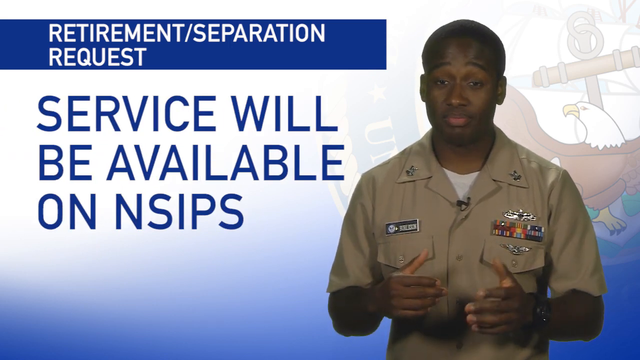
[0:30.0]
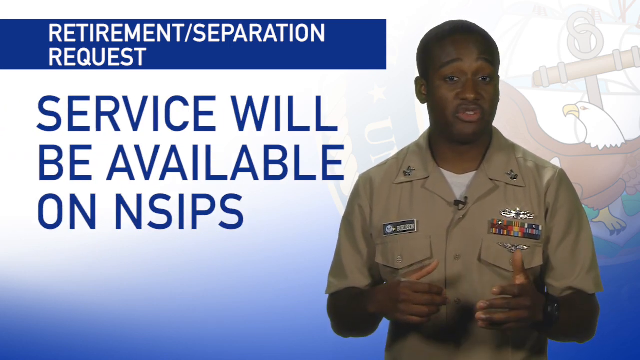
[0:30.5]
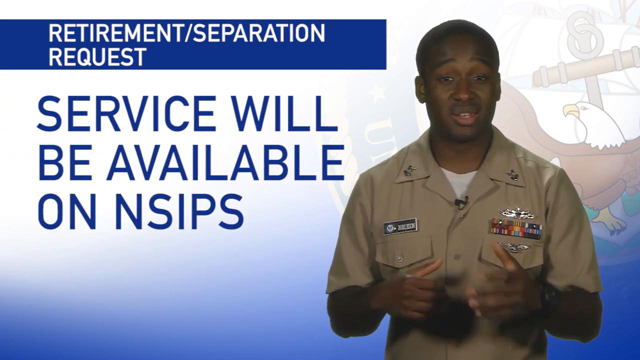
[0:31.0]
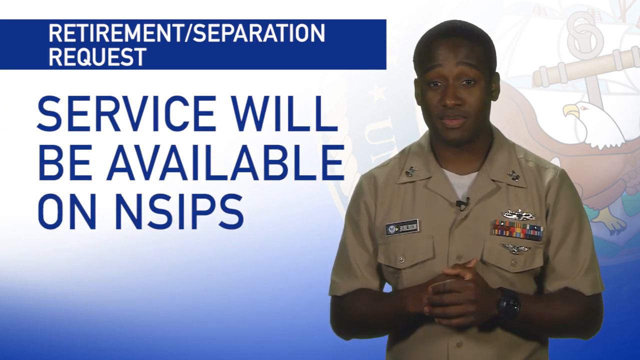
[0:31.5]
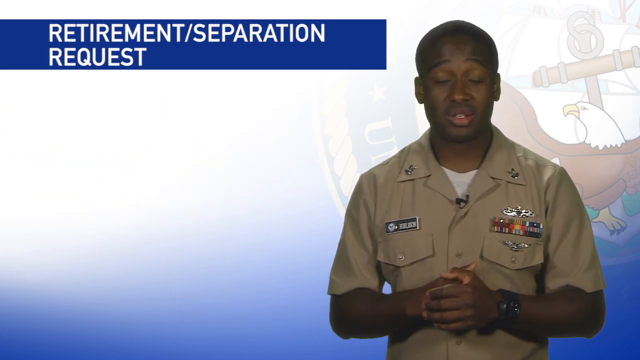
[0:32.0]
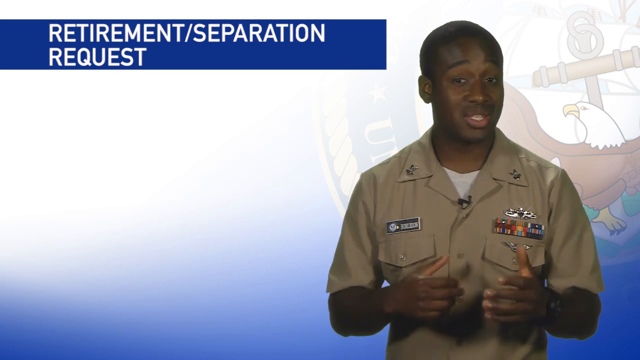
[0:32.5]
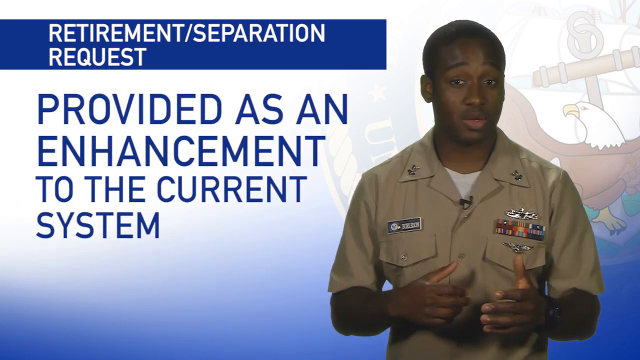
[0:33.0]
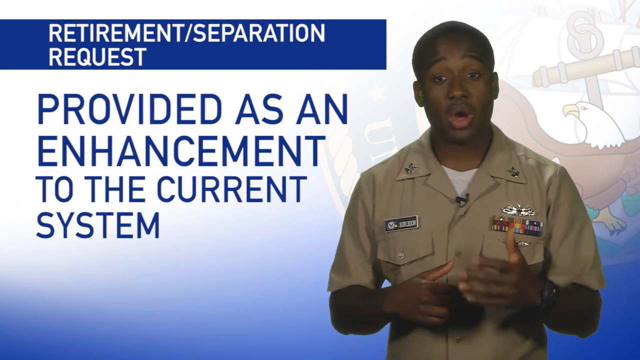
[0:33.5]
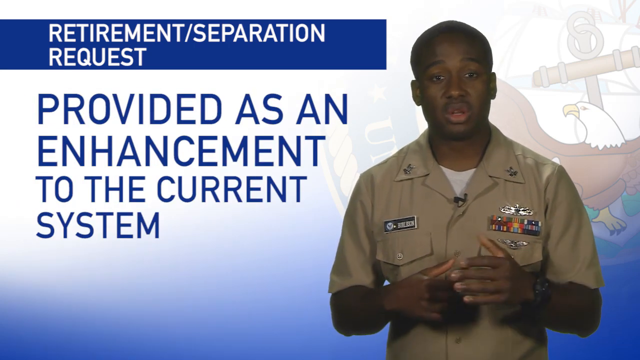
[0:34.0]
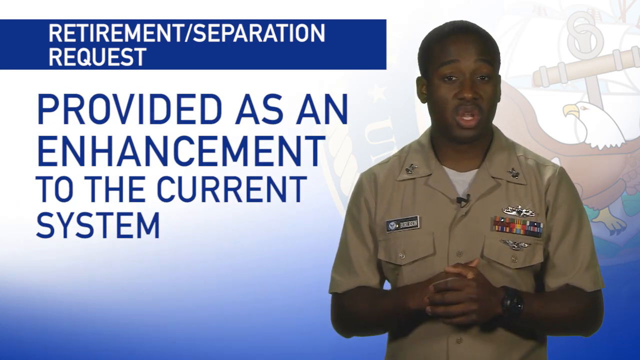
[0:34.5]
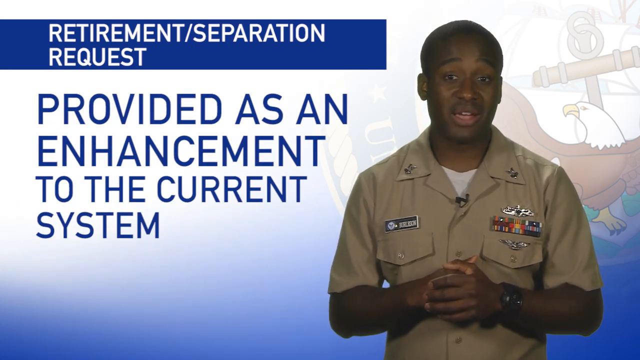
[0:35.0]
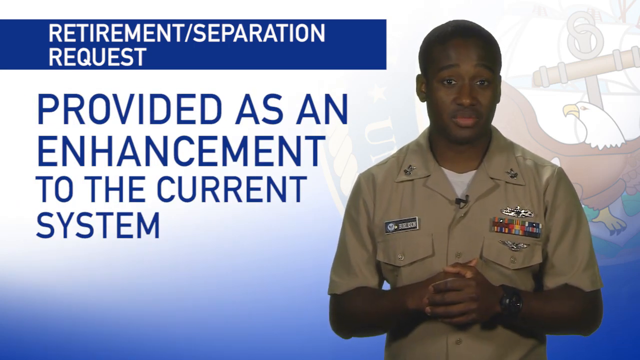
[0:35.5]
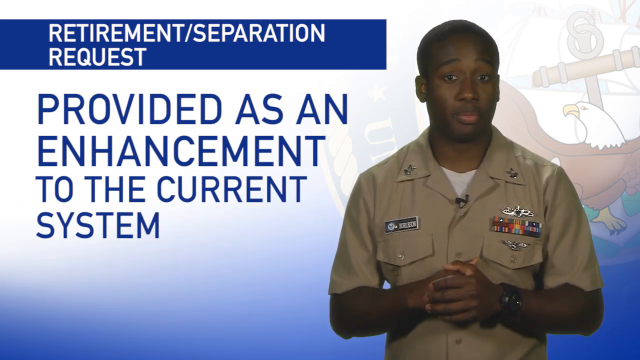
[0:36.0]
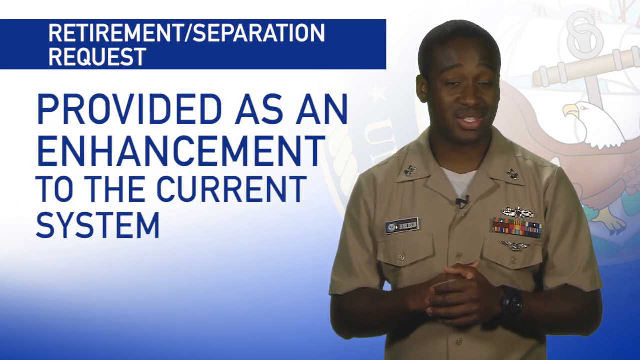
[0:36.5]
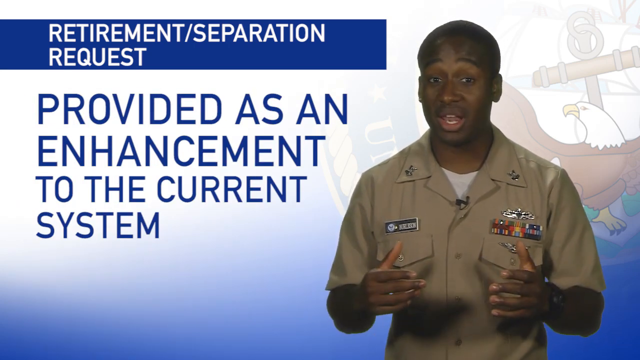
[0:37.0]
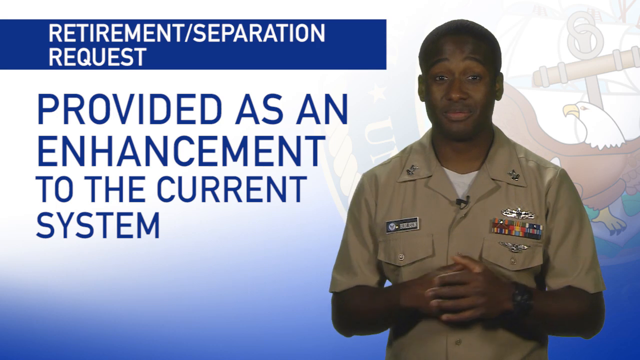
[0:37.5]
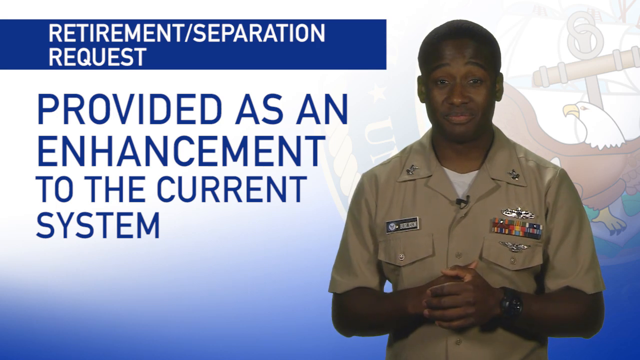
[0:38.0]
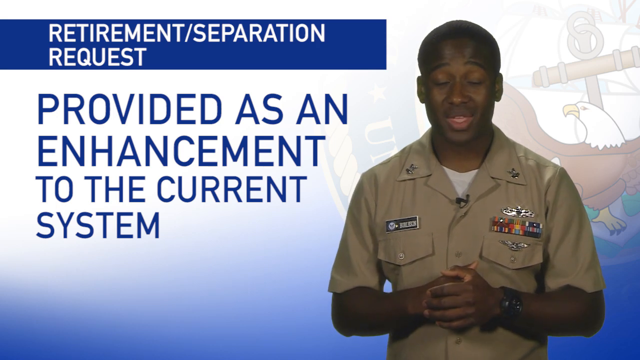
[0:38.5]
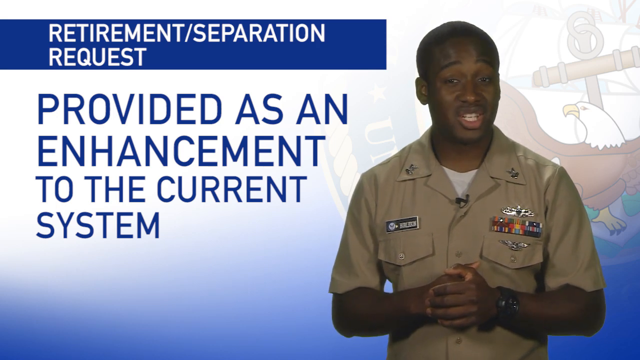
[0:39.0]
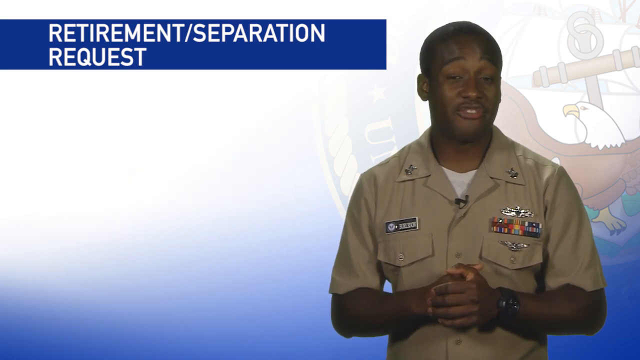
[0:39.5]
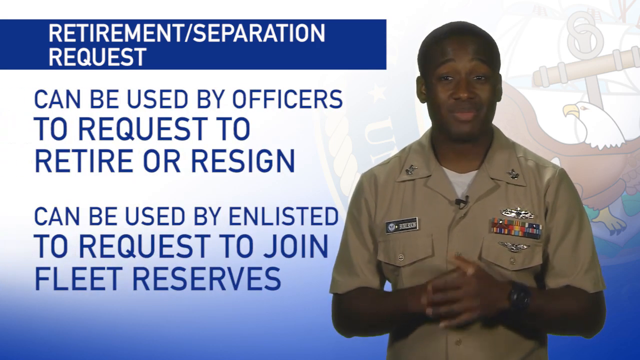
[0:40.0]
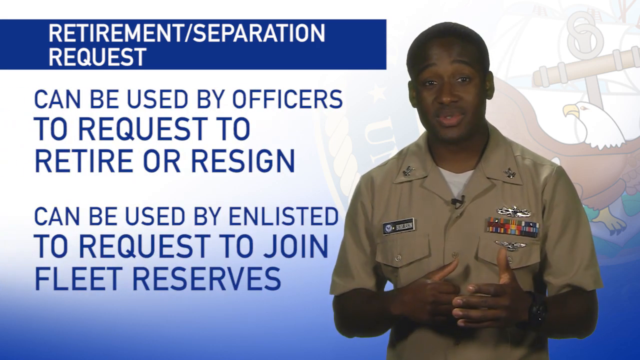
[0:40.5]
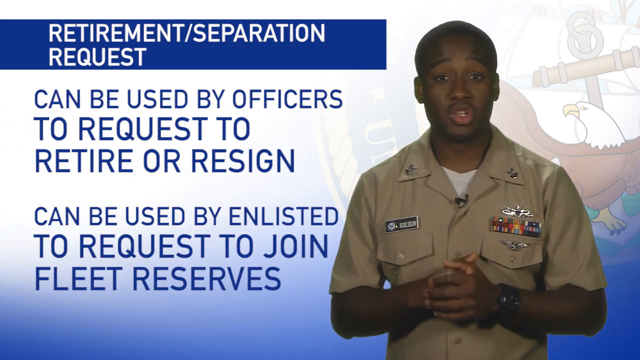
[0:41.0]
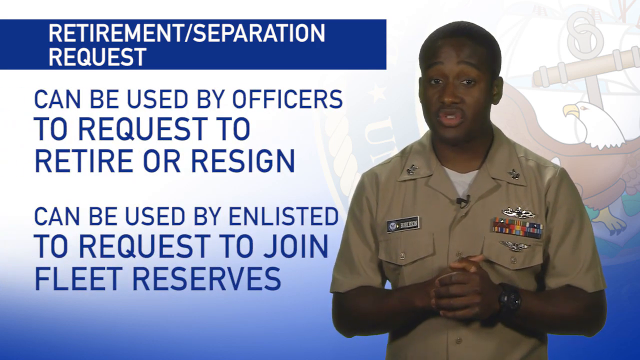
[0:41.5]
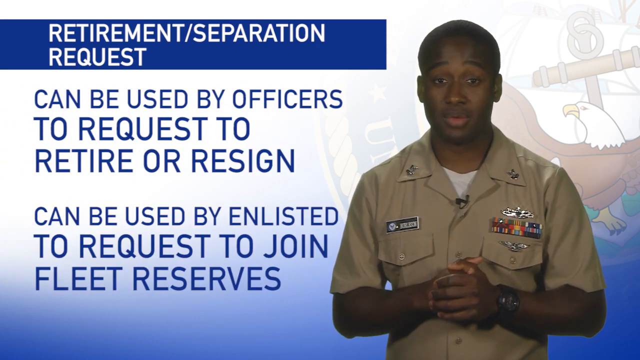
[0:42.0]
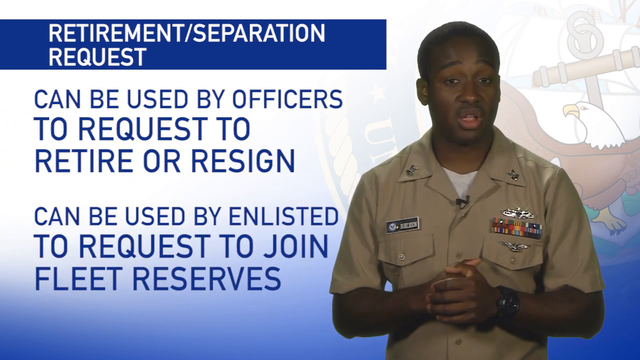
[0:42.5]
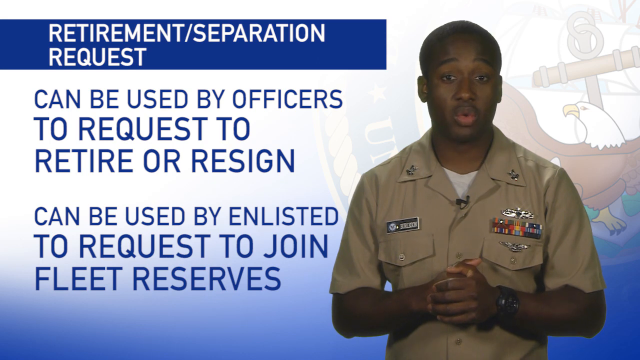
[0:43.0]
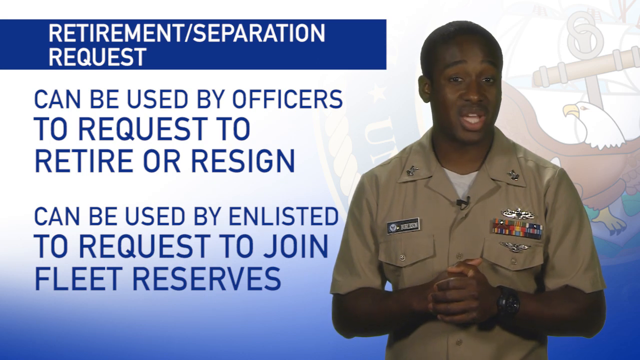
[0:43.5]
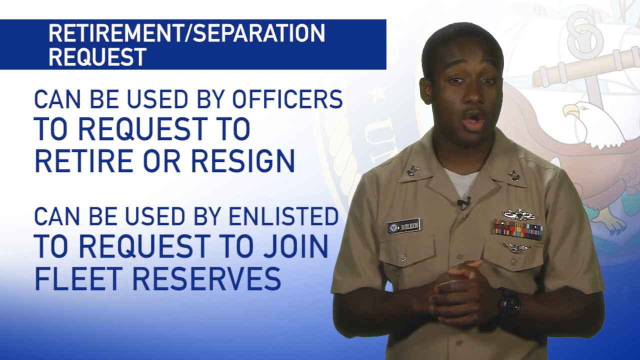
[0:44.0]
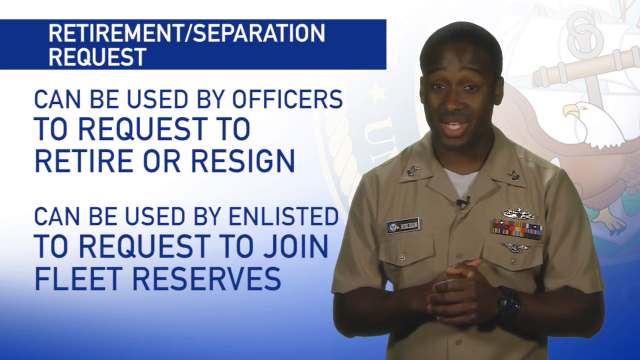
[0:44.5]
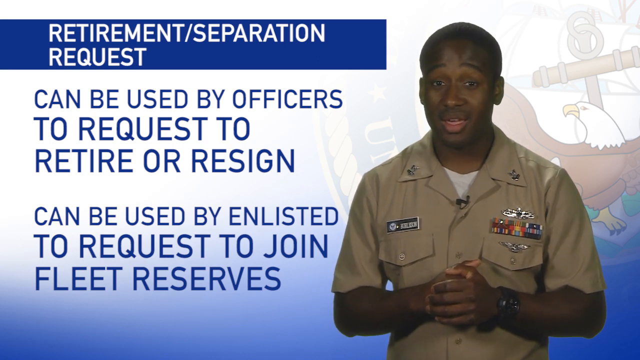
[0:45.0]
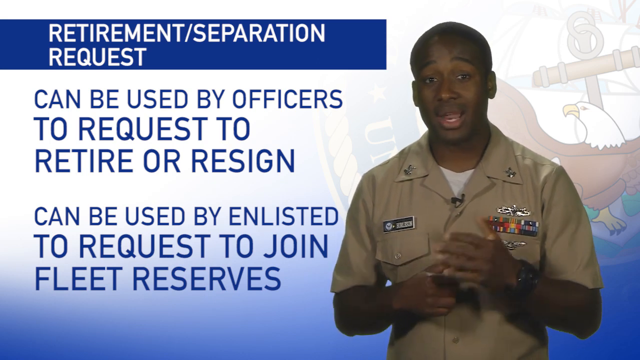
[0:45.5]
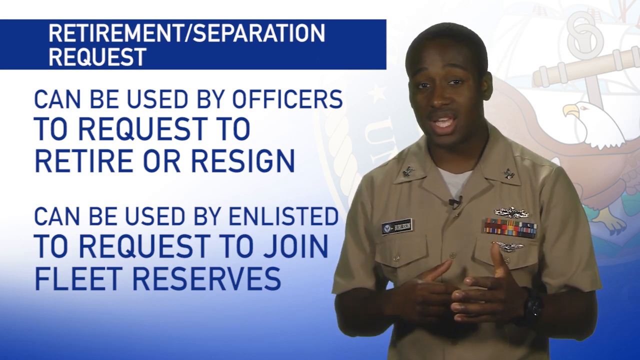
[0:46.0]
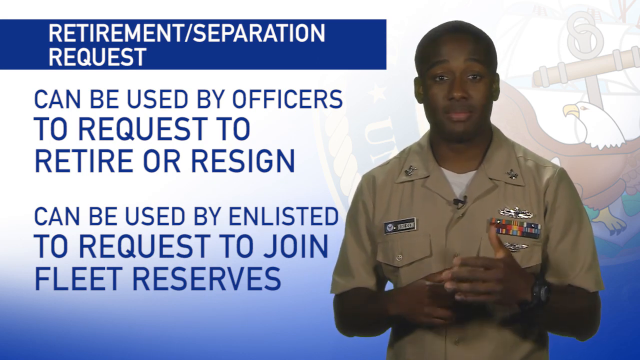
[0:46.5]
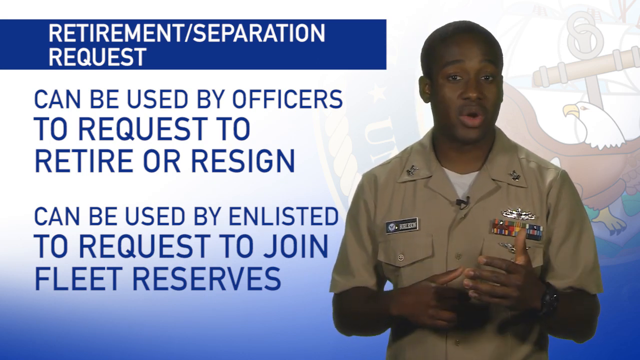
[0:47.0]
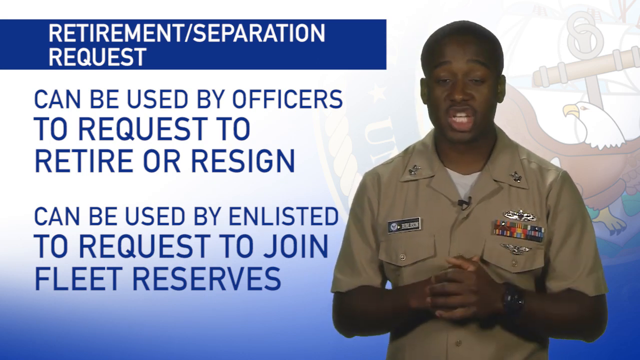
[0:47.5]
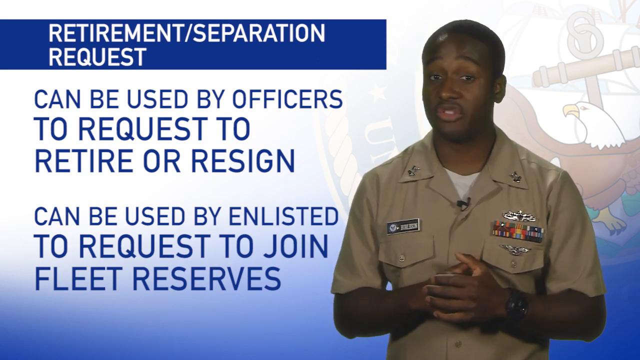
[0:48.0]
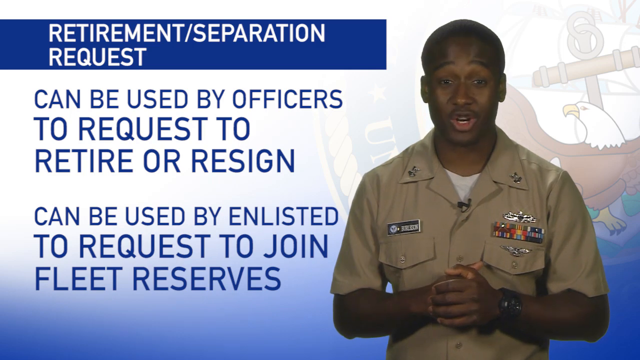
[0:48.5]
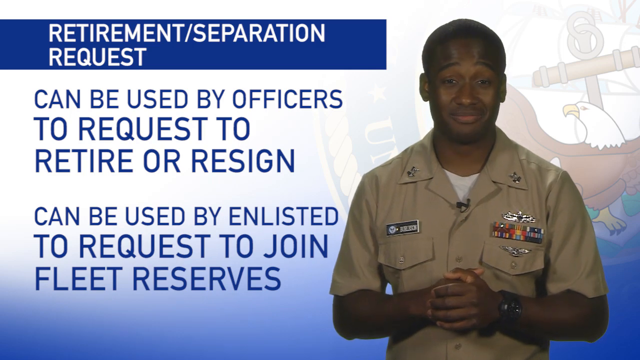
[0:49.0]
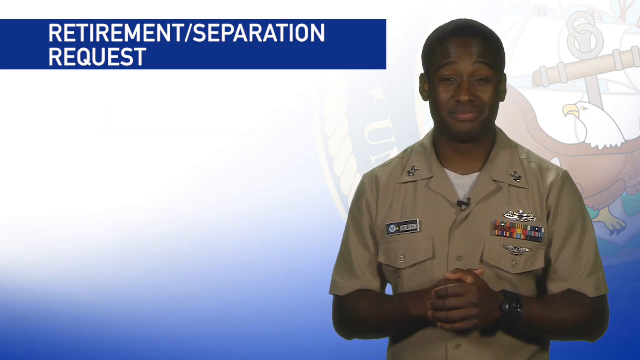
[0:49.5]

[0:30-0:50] A young Black soldier with medals on his chest and a buzz cut wears a brown army fatigue shirt. Text on the screen reads "retirement separation request" in white with a blue square around it, and underneath, in bigger letters, "service will be available in NSIPS." The man gestures with his hands in an informative manner. Text then reads "provide these as an enhancement to the current system," as the man opens and closes his hands in a welcoming manner. Next the text reads "can be used by officers to request to retire or resign," with "can be used by enlisted to request to join fleet reserves" underneath. The man keeps gesturing. The background is the American Department of Justice logo with an eagle, in blue and gold; the eagle is brown with a yellow beak.